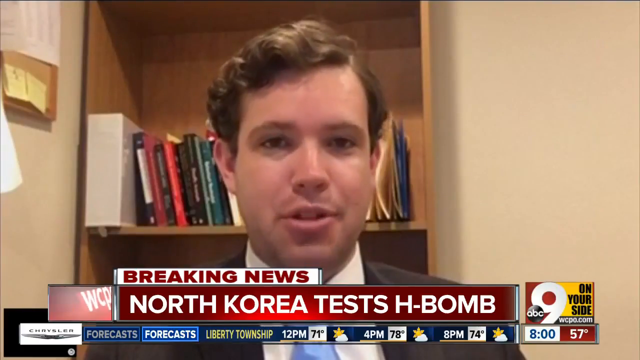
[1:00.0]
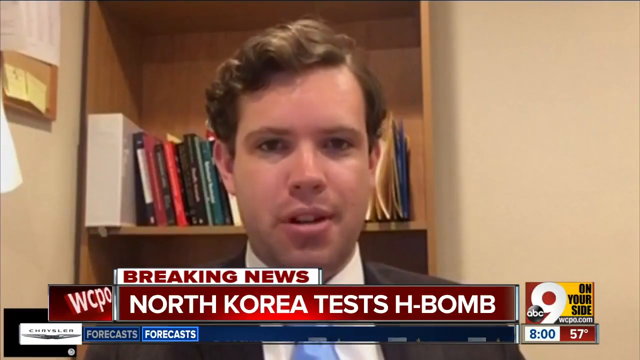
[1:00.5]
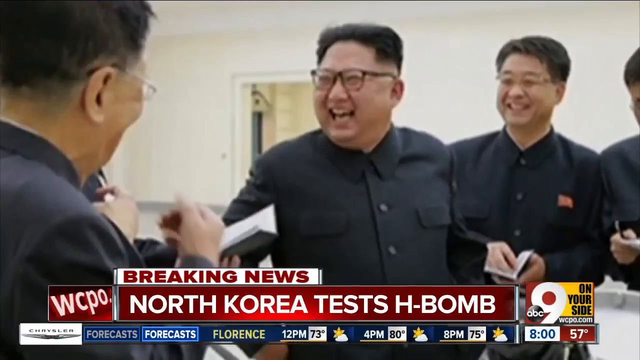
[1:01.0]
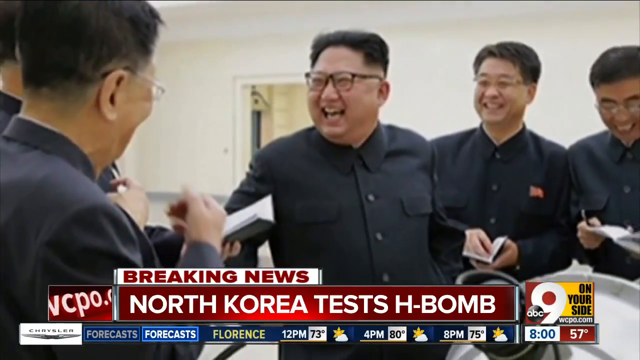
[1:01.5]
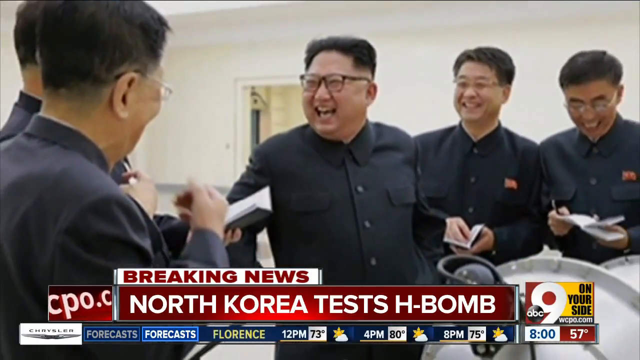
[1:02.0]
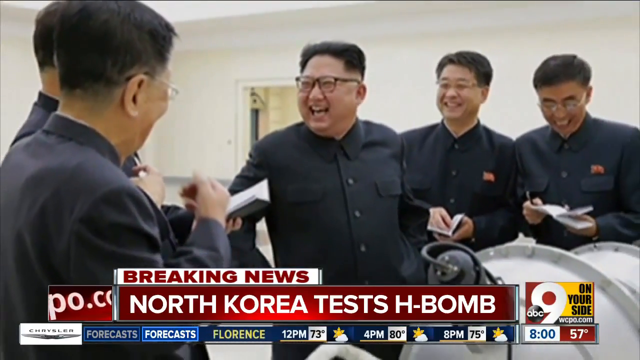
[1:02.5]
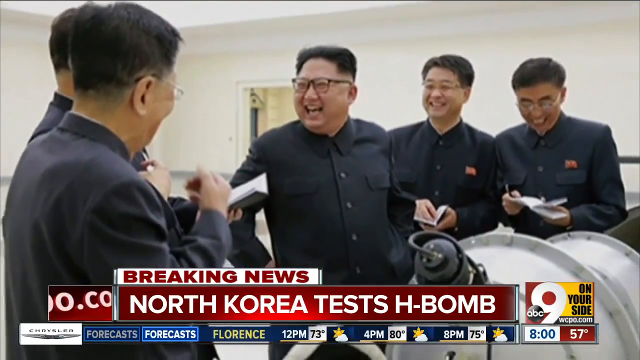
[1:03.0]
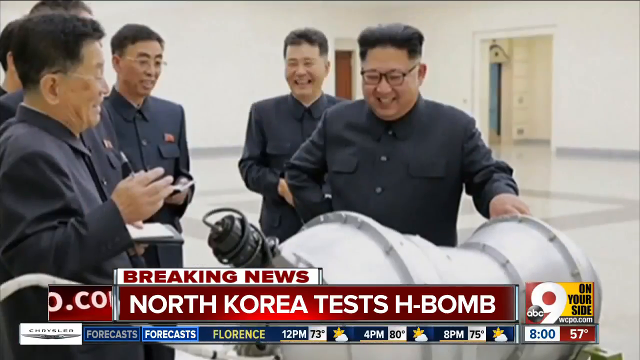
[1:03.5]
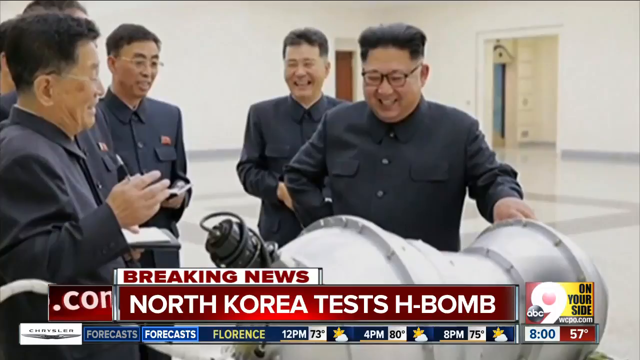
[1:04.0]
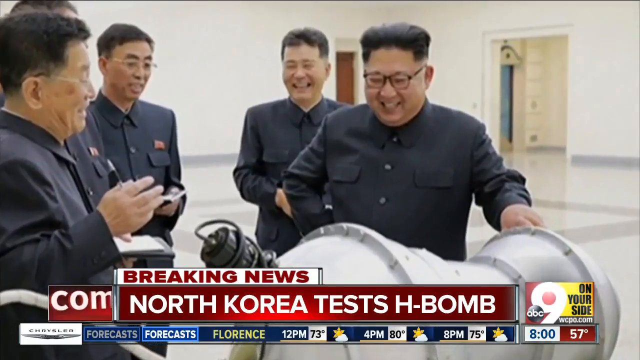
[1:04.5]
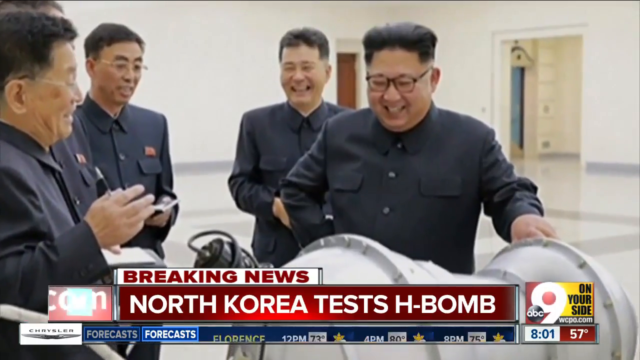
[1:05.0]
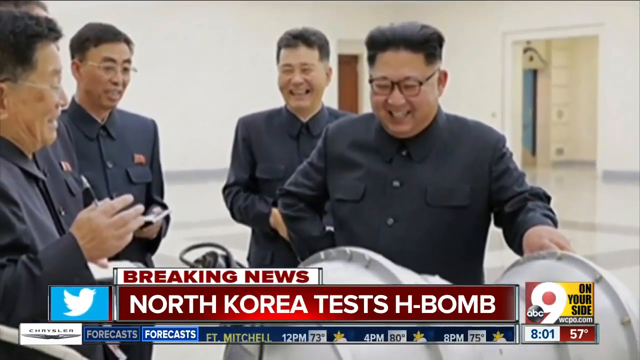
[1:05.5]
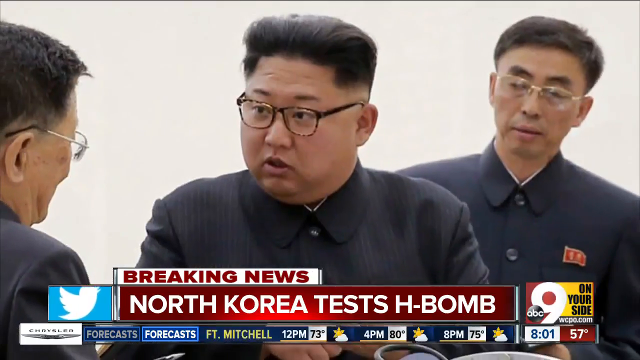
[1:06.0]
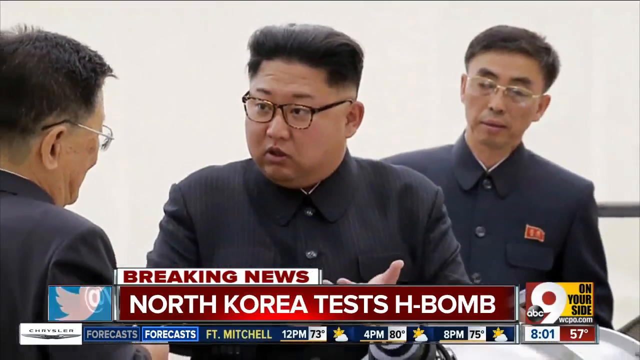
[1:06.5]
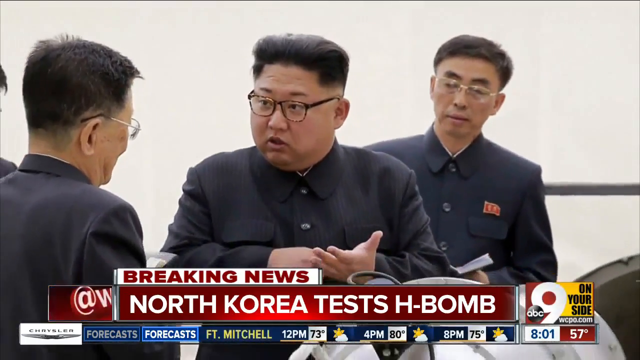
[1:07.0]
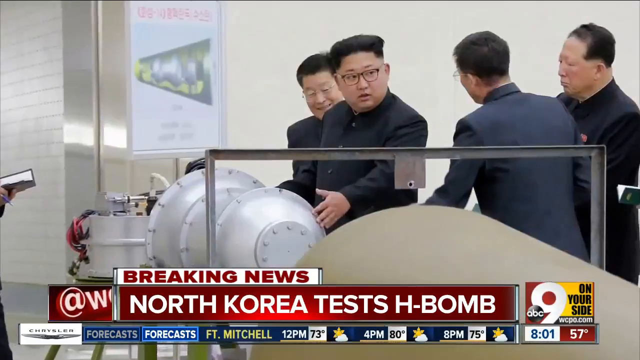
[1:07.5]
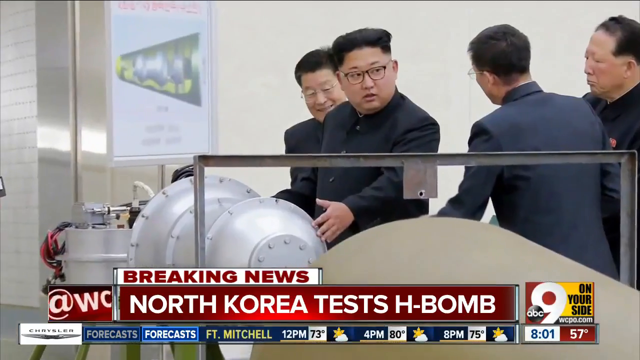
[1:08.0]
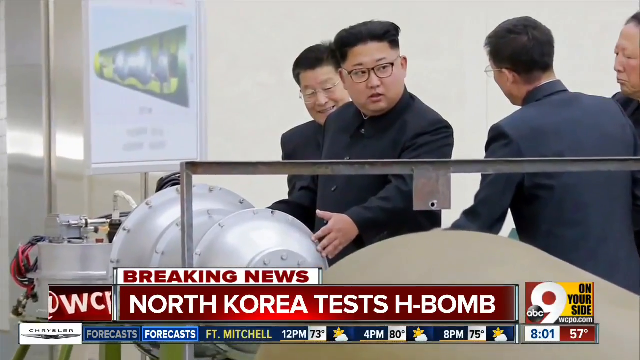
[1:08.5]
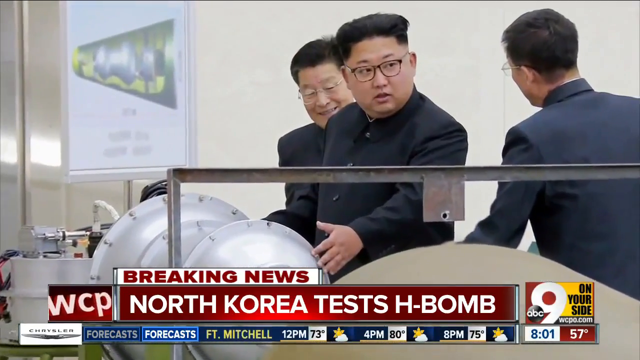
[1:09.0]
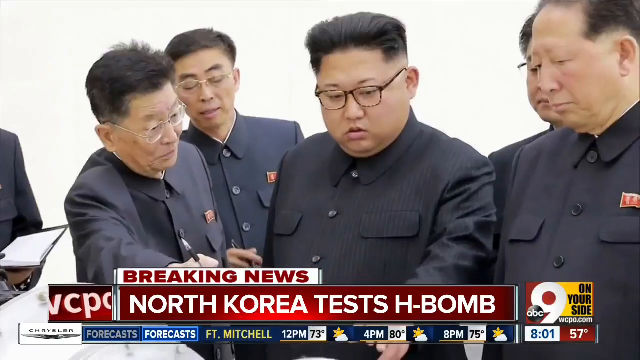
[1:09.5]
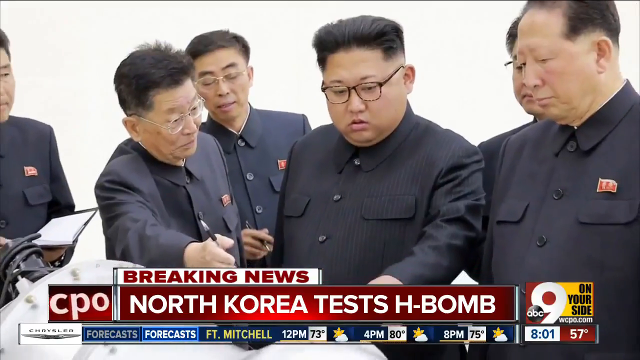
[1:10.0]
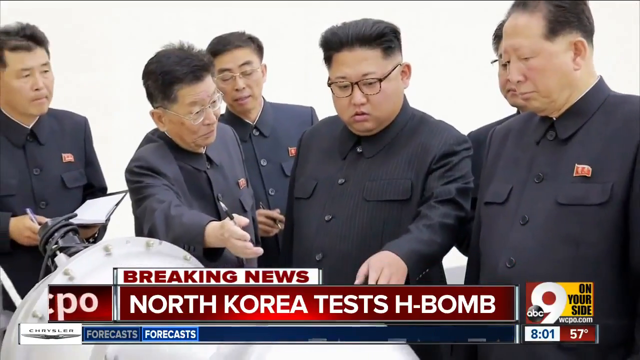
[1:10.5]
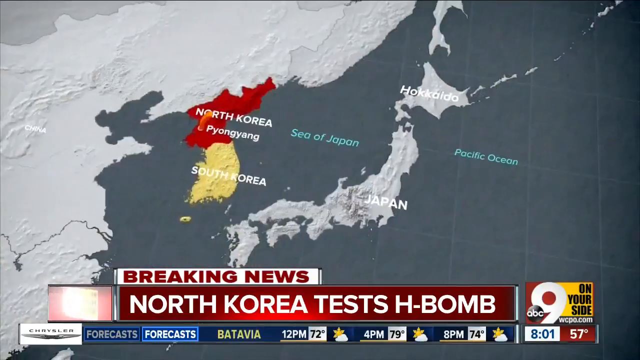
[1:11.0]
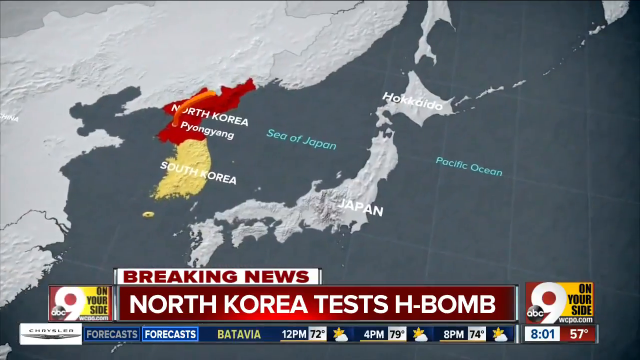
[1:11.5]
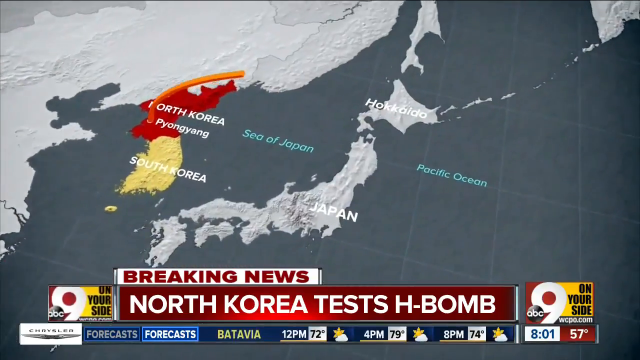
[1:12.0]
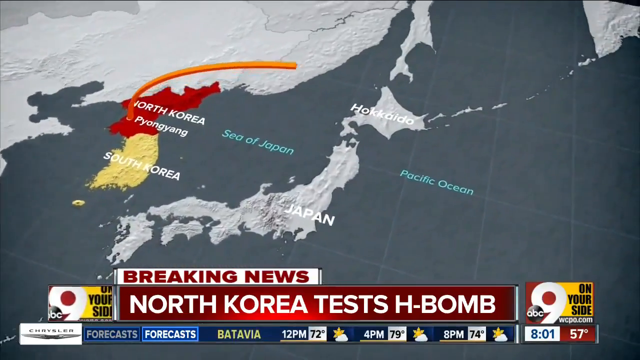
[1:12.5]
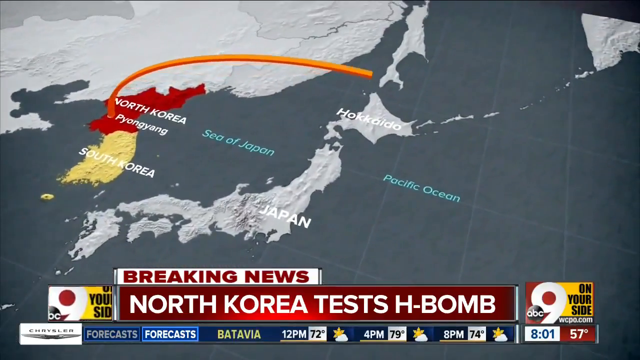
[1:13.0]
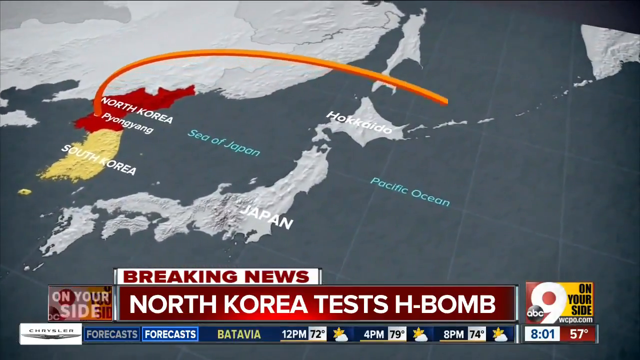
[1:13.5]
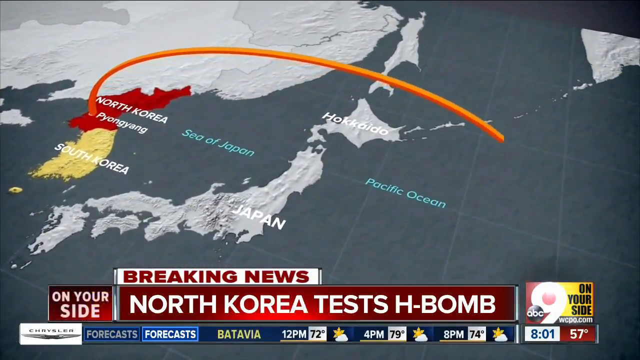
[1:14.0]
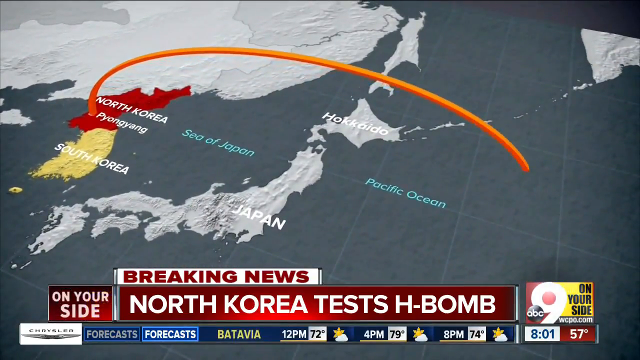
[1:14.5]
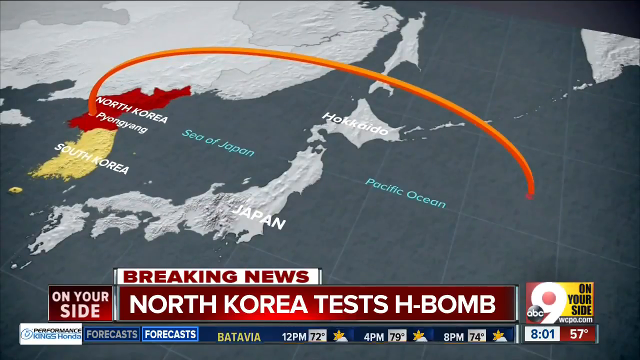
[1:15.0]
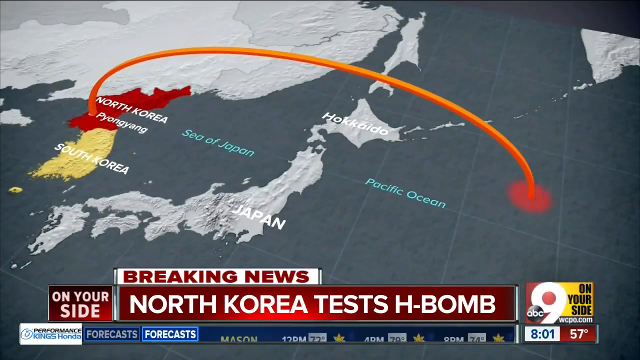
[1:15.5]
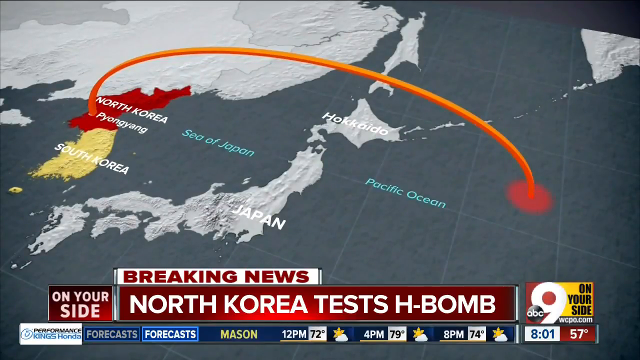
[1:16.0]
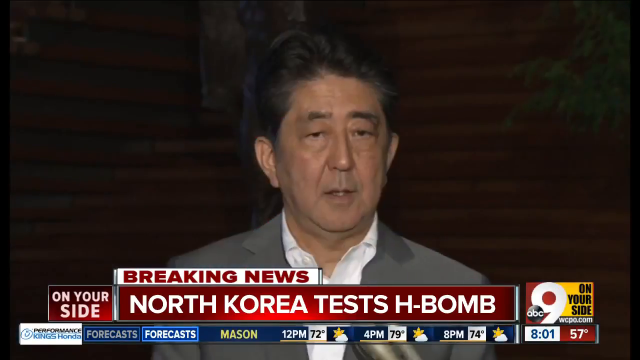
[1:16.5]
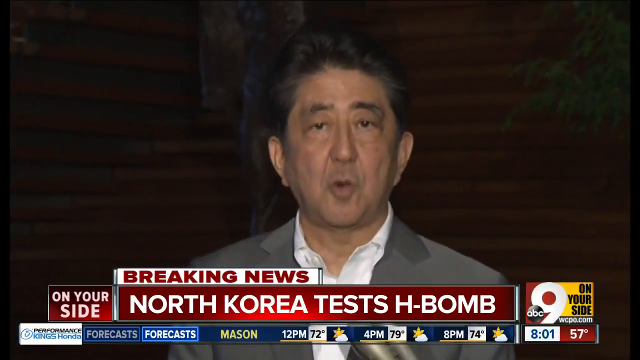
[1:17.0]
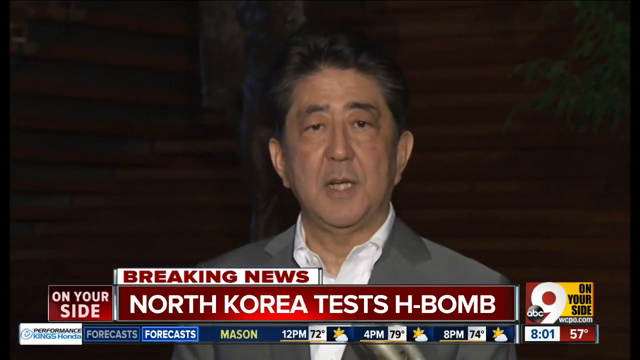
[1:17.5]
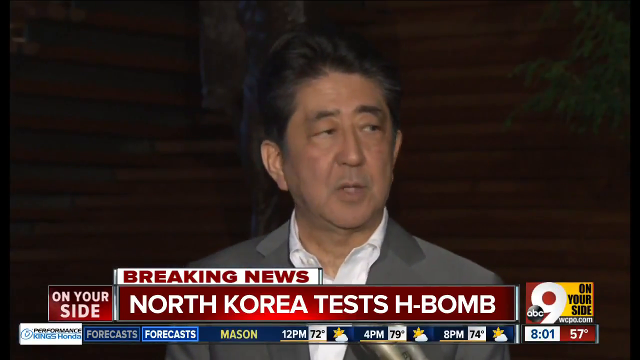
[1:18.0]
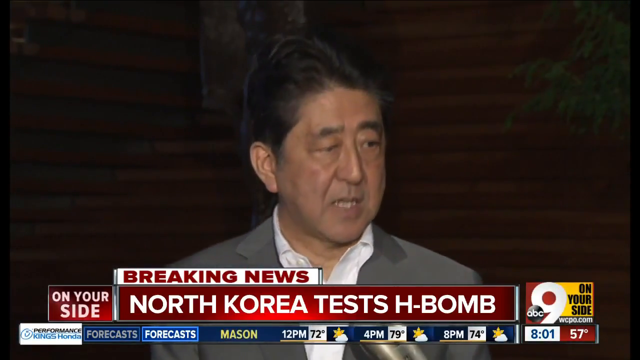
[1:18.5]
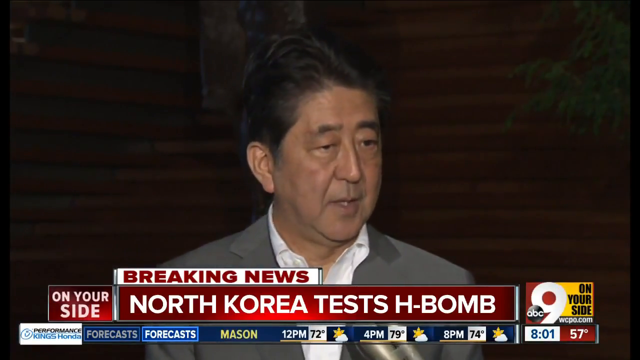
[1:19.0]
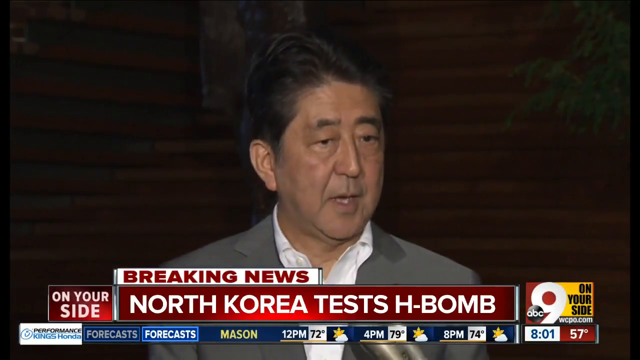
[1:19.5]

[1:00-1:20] A different man in a suit, with brown wavy hair parted on the left, appears to be sitting in his house, in a room with a wall and a bookcase behind him holding several books. A photograph then shows the leader of Korea standing in the middle, body facing the camera, looking off to his right and laughing, with two men on his left and two men on his right. Another photo shows the leader with his left hand on a structure that looks like some pipes, with several men off to his right standing around in black suit tops that look like military jackets. Further photos show the leader standing in different areas, always in front of a white industrial pipe-like thing, with men standing around him in different formations; he is usually laughing or talking with them. In one, a man points down at something, showing him something.